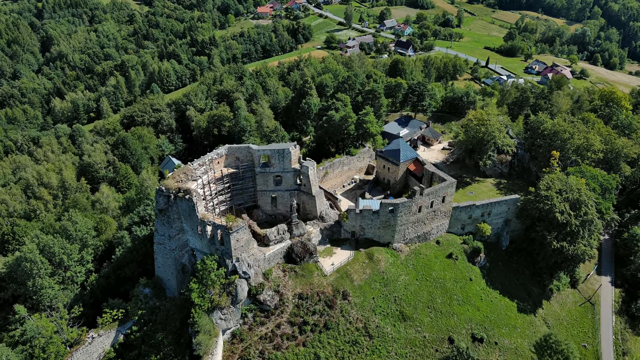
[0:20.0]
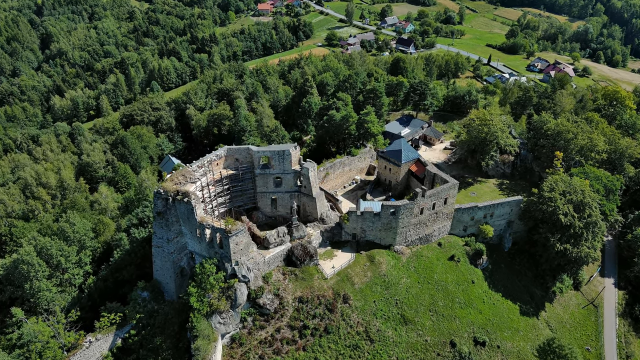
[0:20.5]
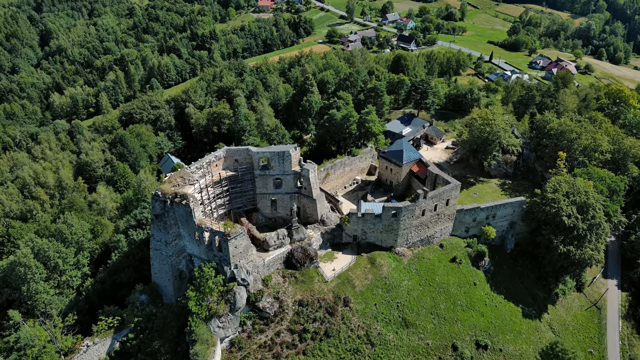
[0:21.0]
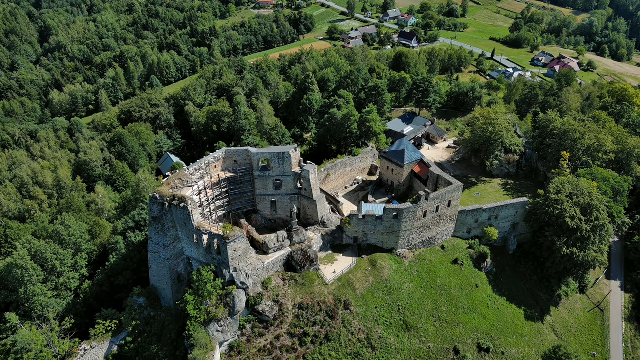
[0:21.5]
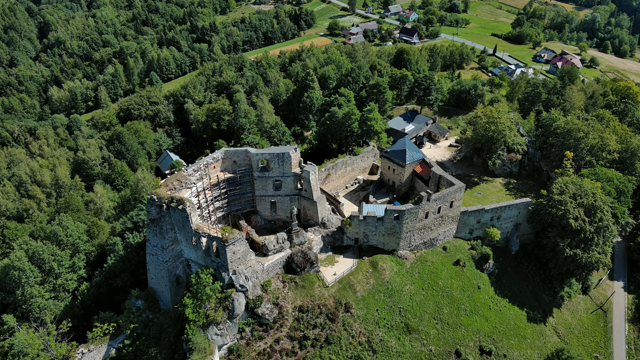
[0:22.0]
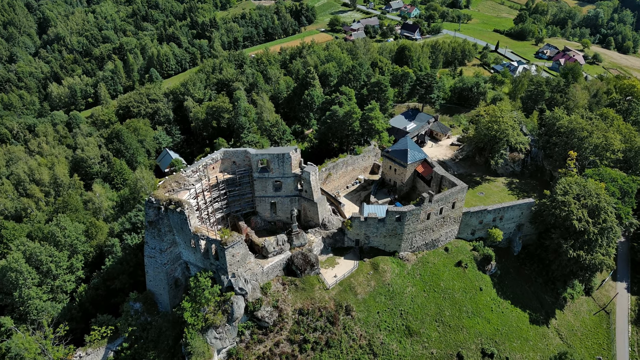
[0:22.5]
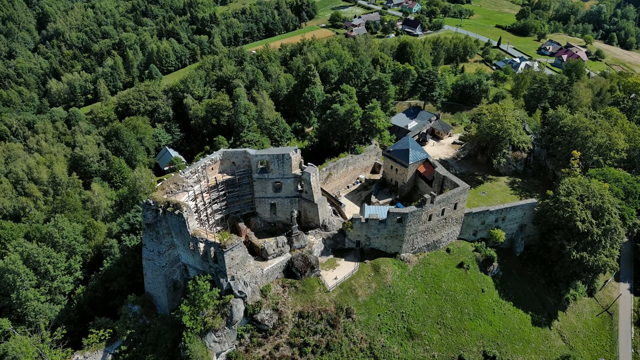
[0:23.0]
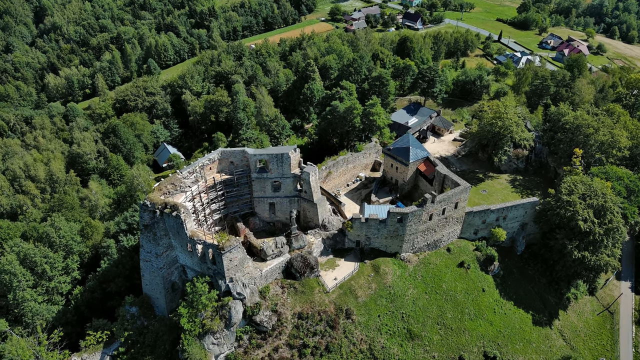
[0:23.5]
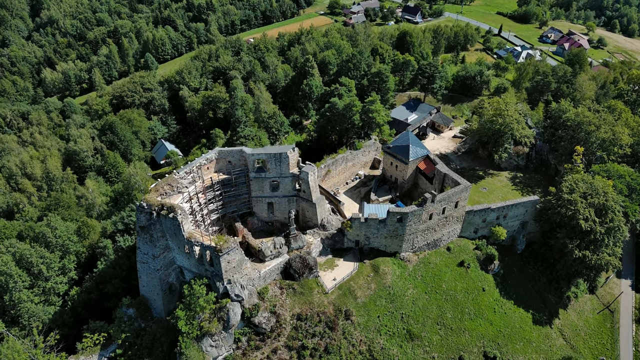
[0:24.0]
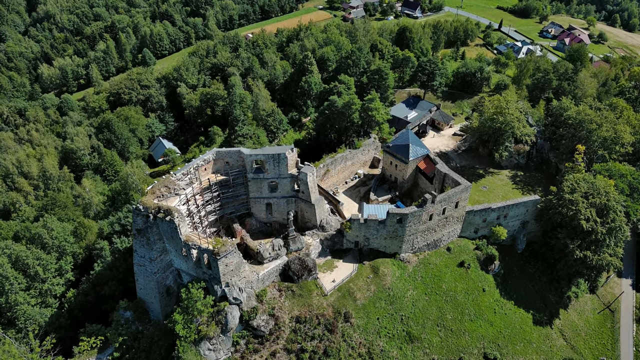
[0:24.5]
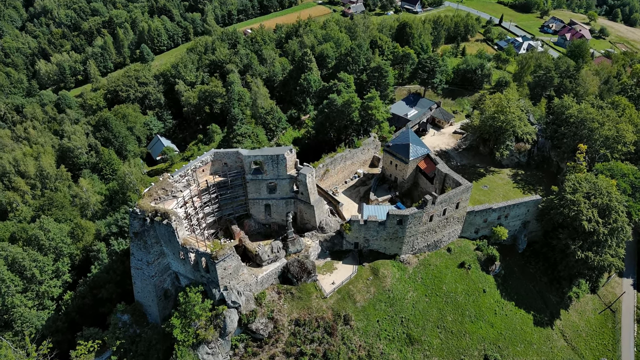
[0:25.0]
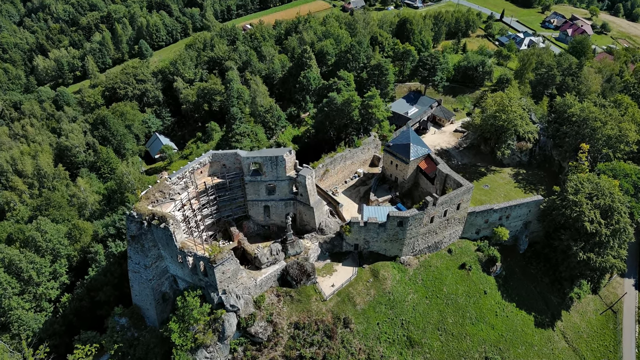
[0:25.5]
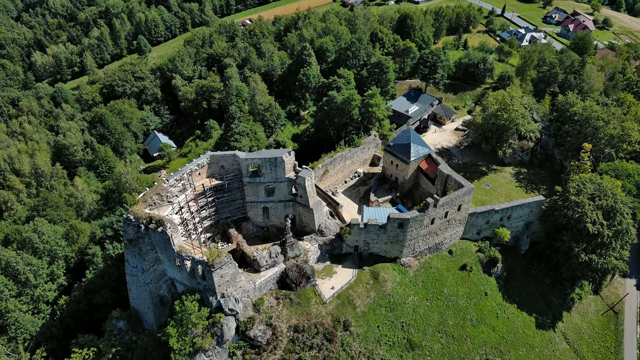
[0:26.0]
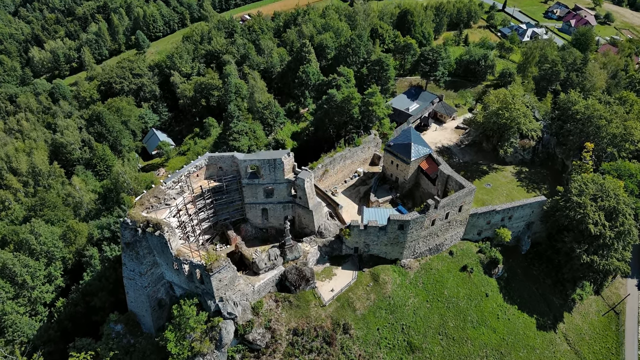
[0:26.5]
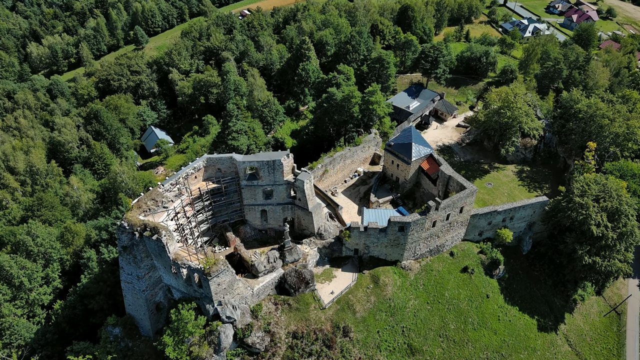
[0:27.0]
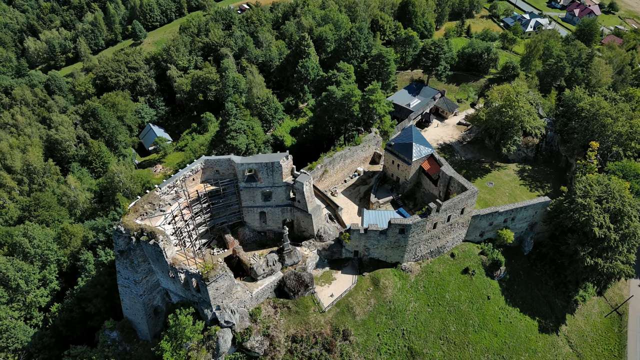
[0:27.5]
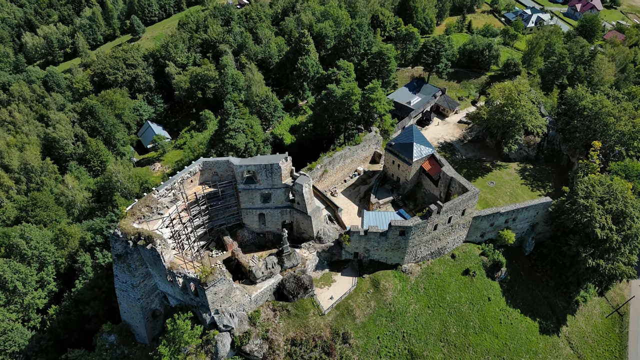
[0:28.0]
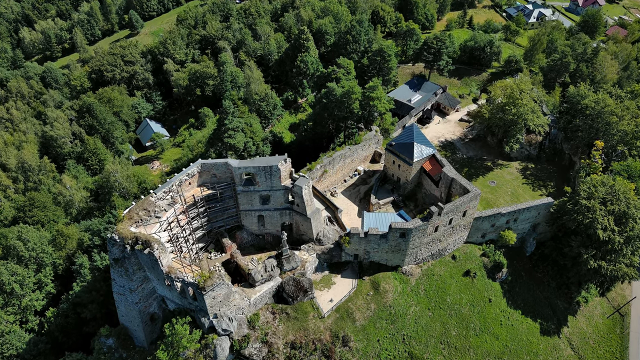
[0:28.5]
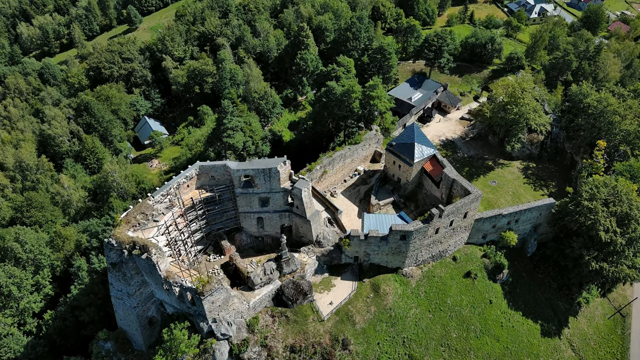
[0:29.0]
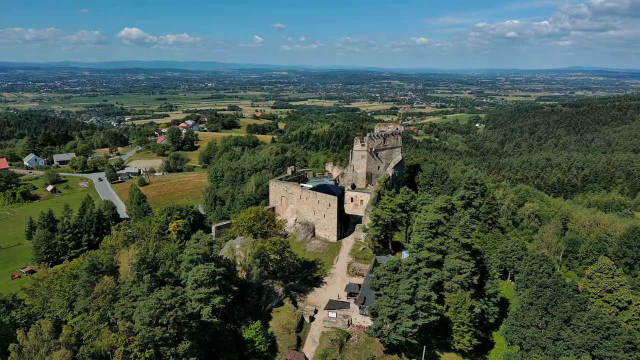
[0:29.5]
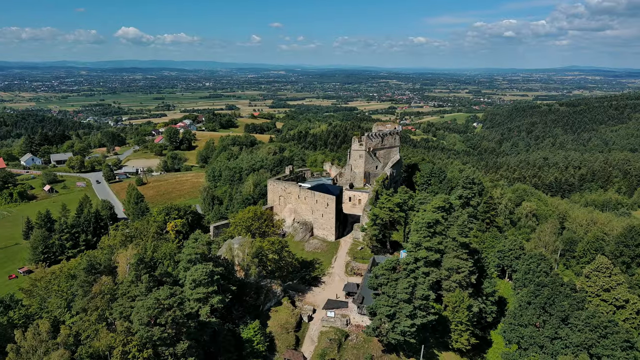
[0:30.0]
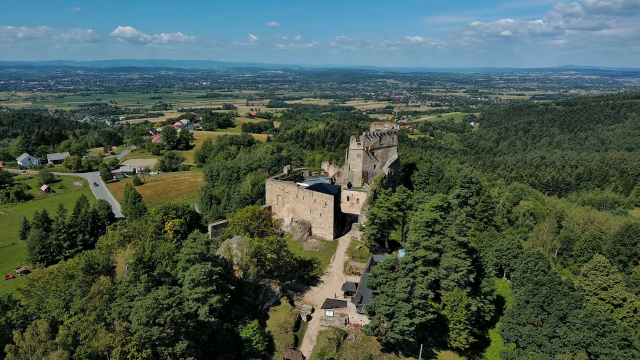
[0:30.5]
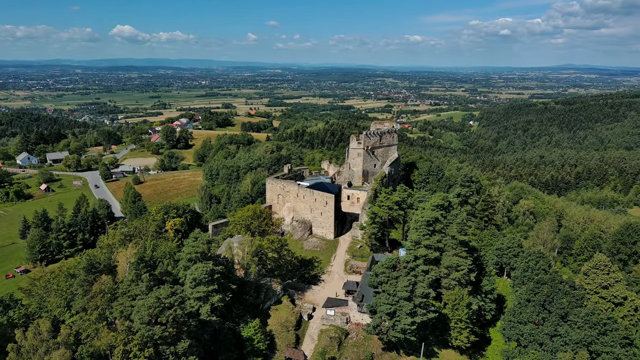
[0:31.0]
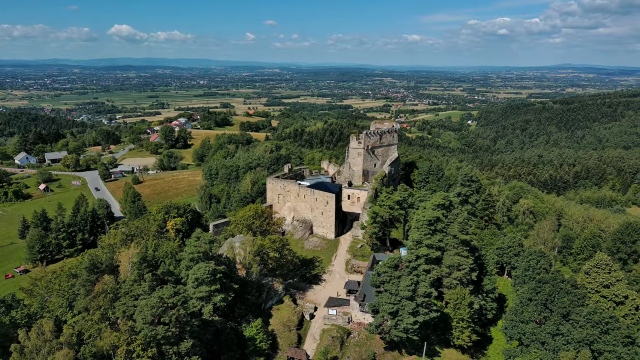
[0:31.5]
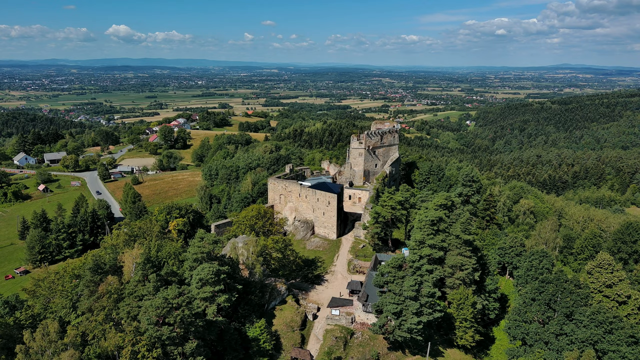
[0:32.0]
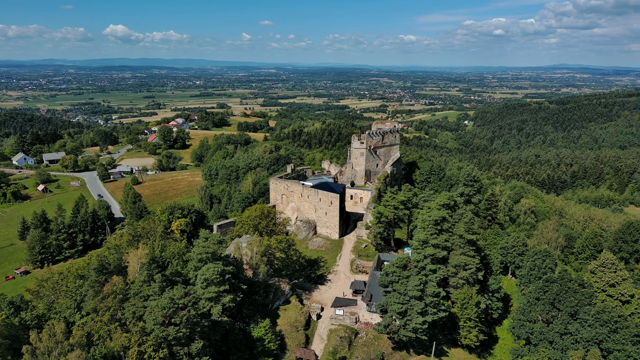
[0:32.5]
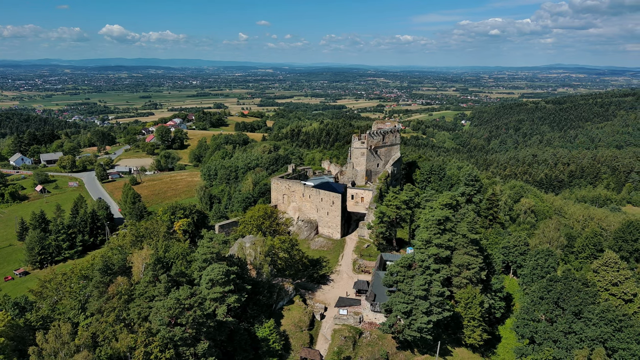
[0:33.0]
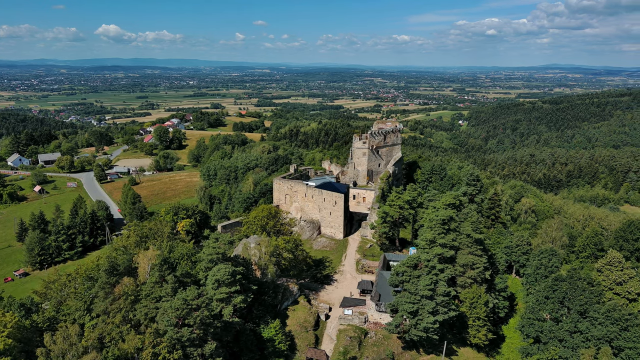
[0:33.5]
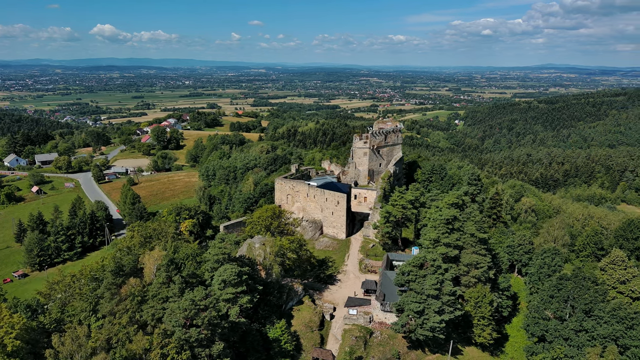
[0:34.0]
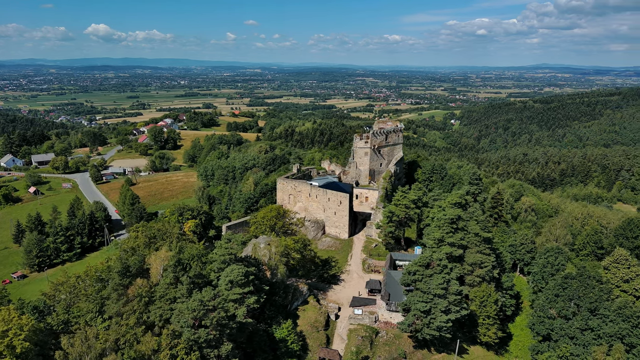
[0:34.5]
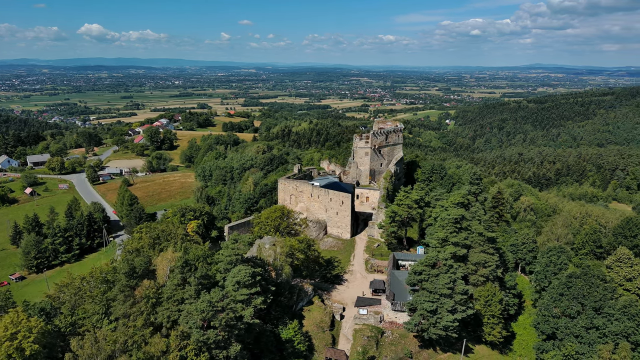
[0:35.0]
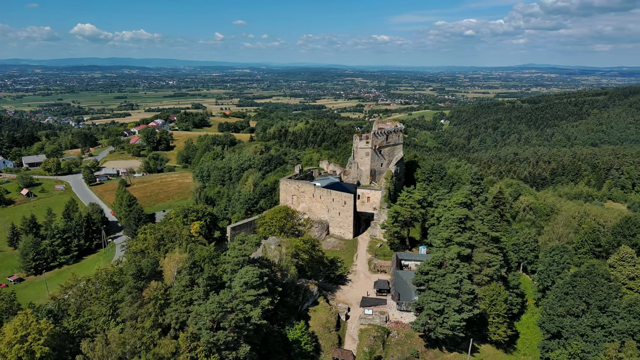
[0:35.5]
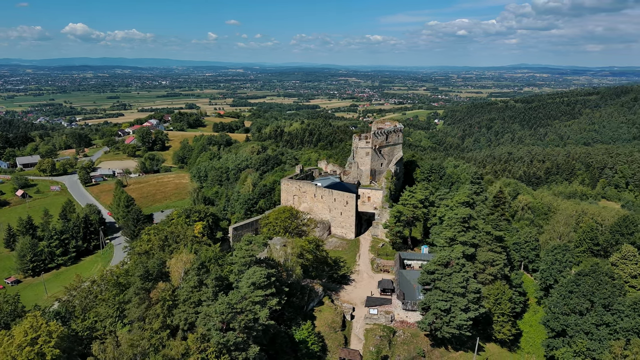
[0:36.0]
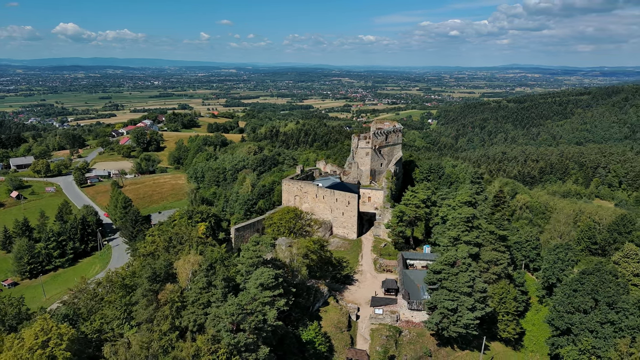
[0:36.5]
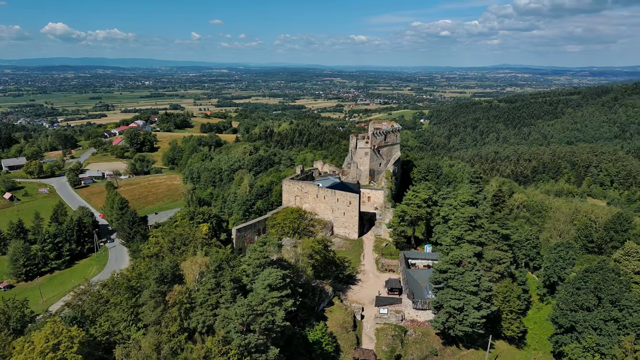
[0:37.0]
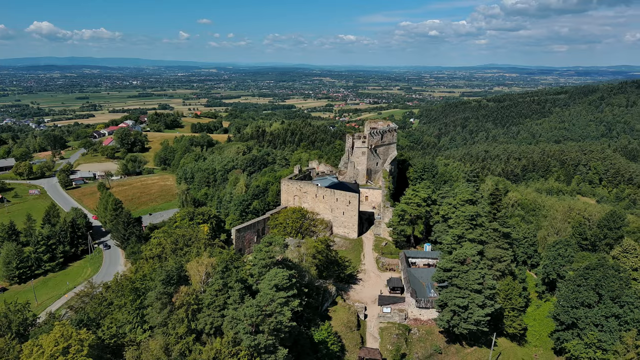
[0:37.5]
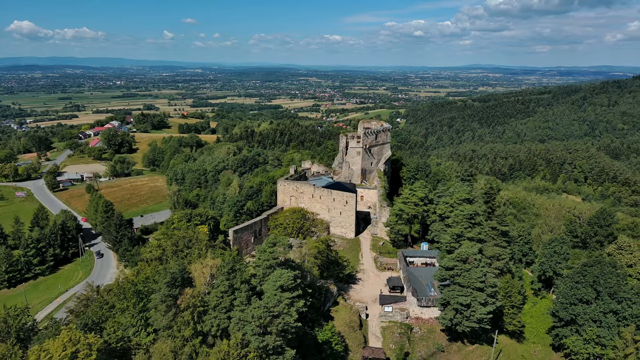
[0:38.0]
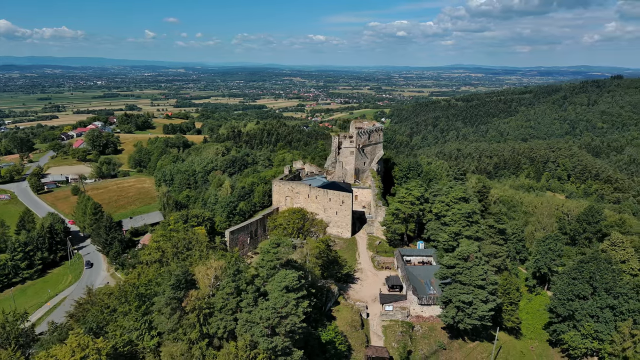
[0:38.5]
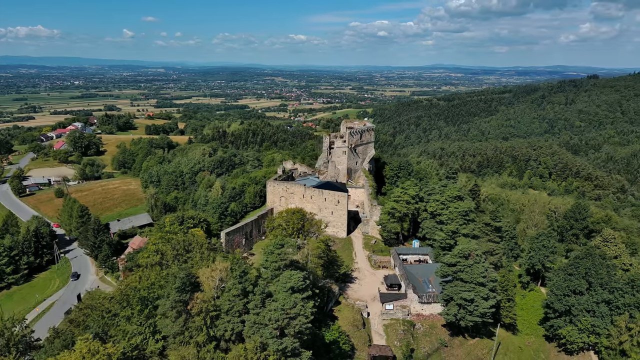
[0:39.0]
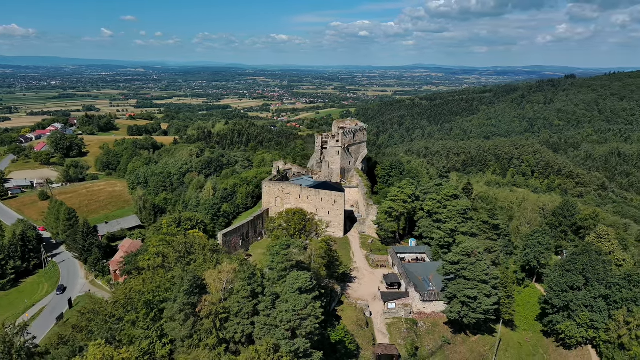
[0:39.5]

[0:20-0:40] A daylight aerial view continues over the old structure, which appears to be made of stone or old rock and brick. It looks several stories tall, maybe four or five, probably 50 or 60 feet. Part of it has been broken off, while part of it remains. The view then shifts to a different angle showing a road leading up to the structure. As far as the eye can see, the surroundings are country, plains, trees and open terrain.